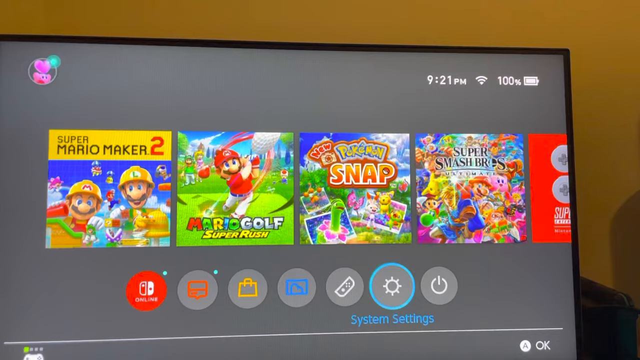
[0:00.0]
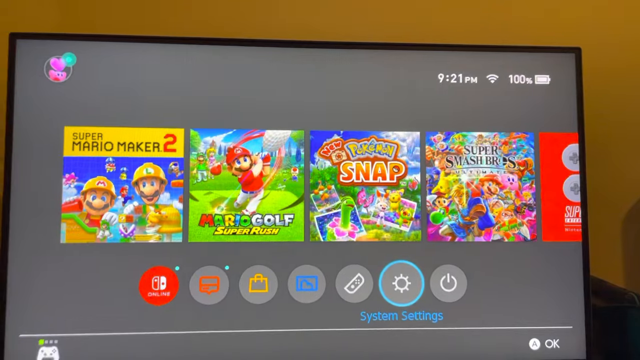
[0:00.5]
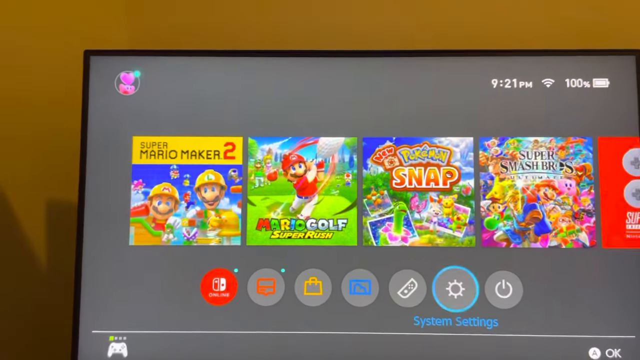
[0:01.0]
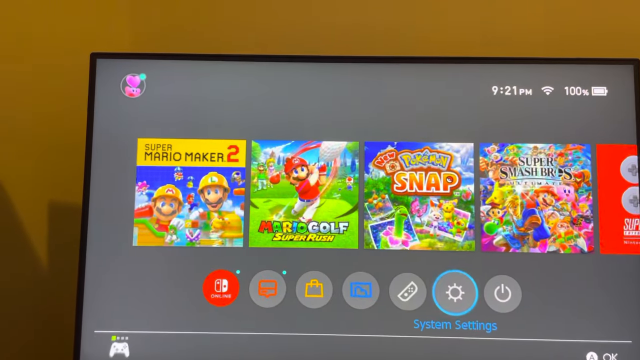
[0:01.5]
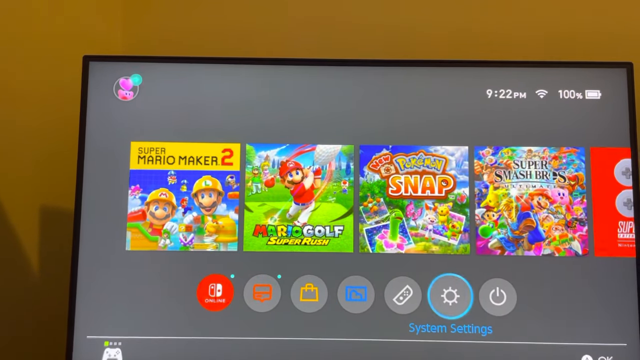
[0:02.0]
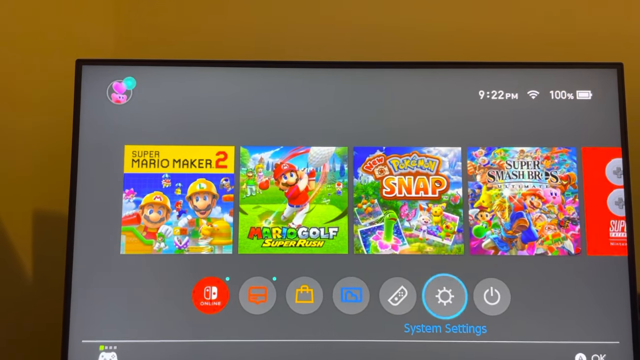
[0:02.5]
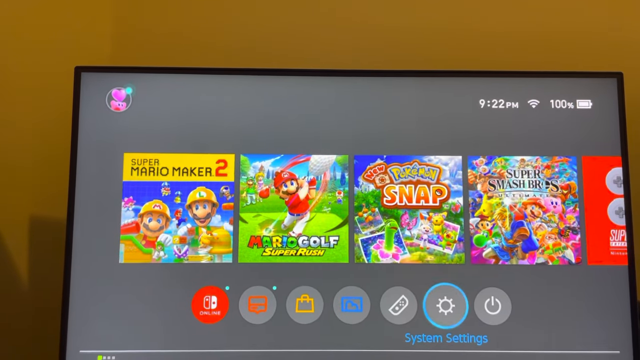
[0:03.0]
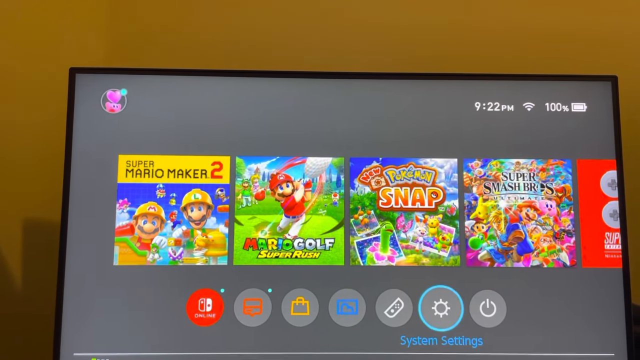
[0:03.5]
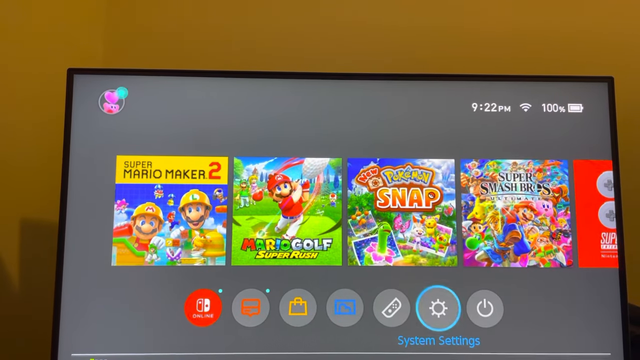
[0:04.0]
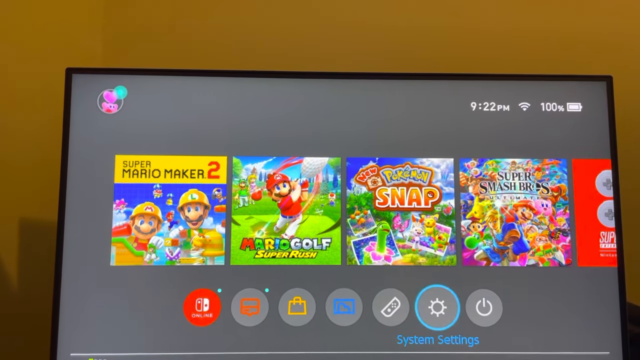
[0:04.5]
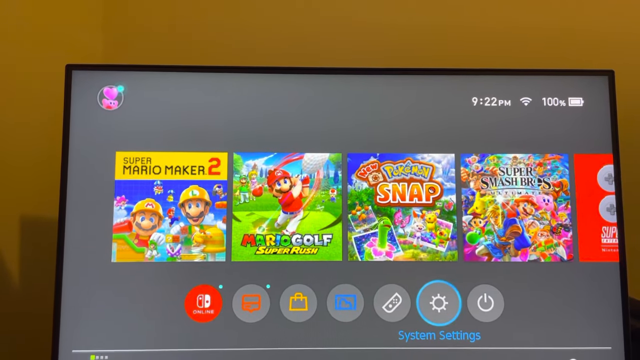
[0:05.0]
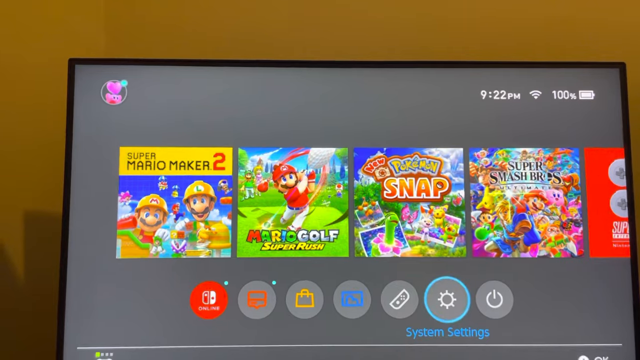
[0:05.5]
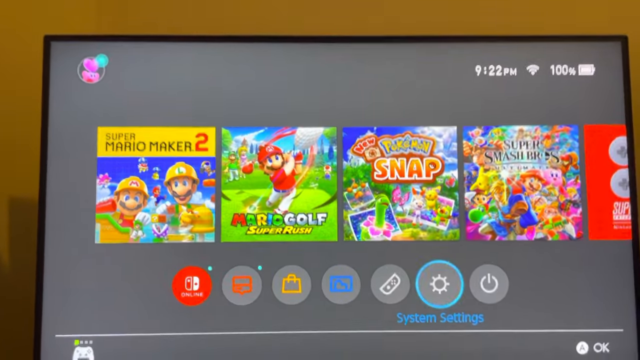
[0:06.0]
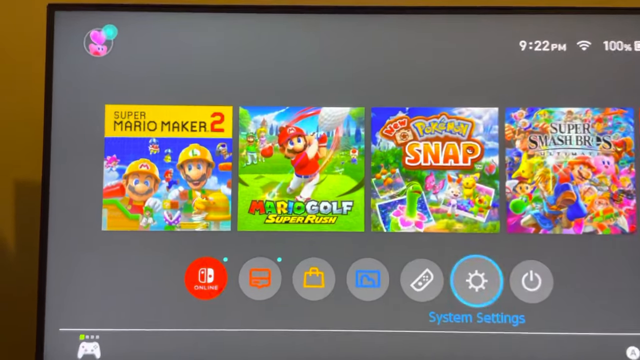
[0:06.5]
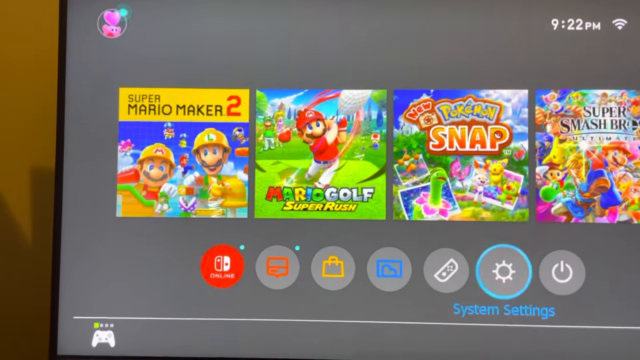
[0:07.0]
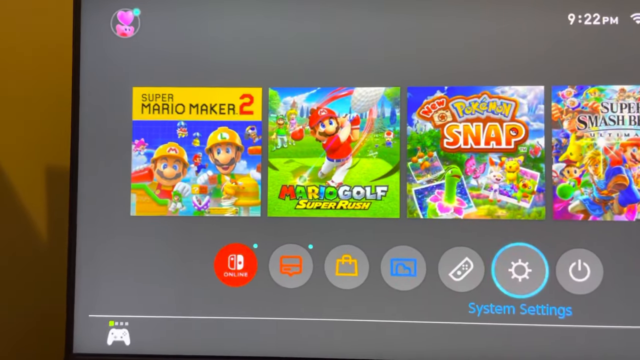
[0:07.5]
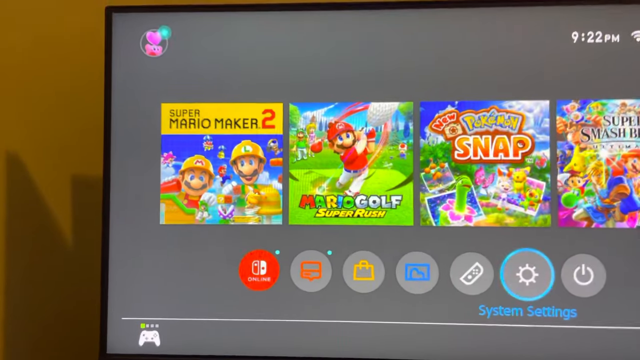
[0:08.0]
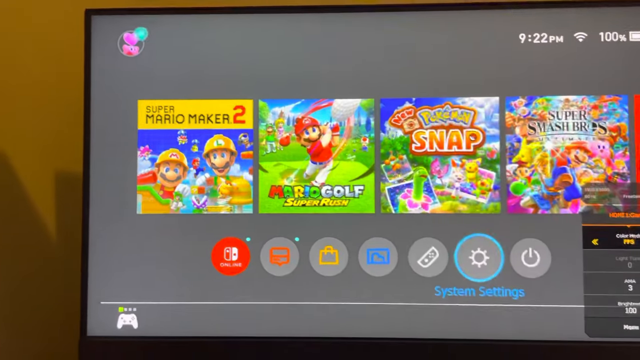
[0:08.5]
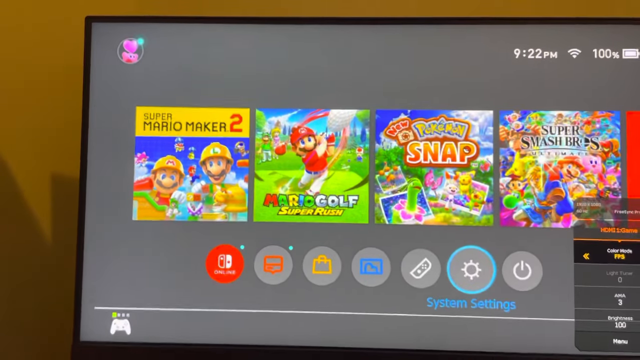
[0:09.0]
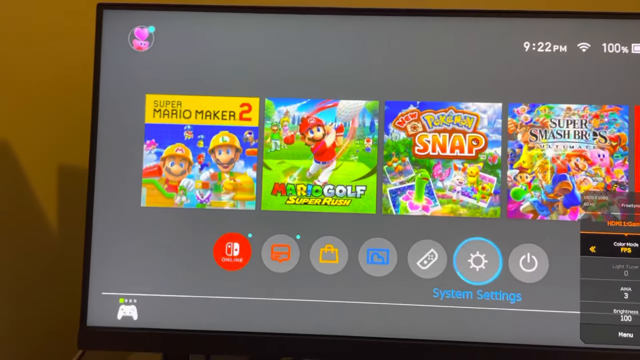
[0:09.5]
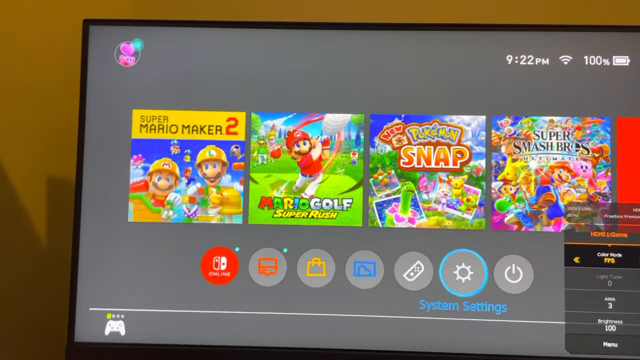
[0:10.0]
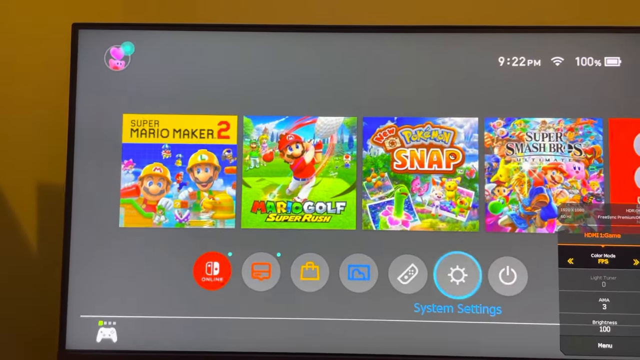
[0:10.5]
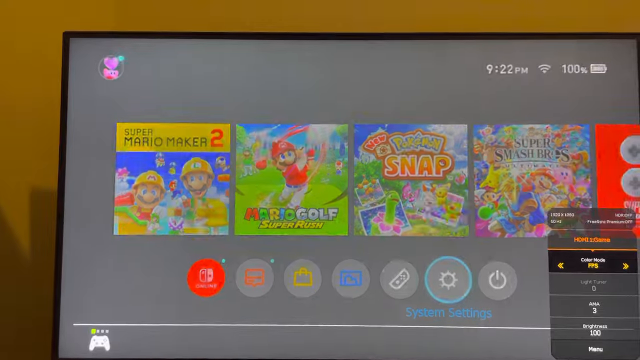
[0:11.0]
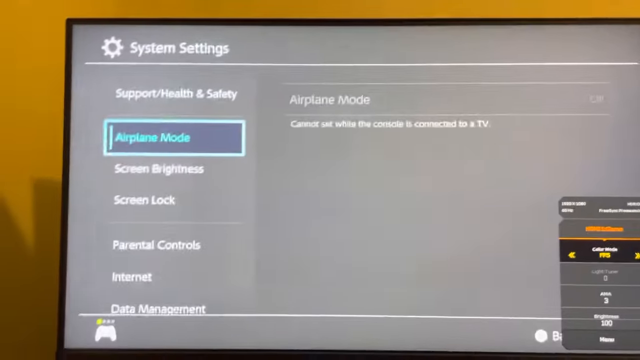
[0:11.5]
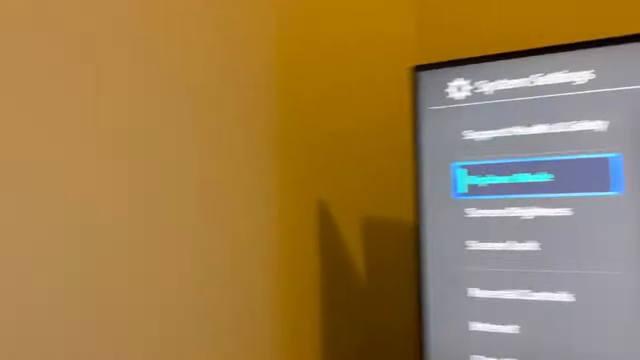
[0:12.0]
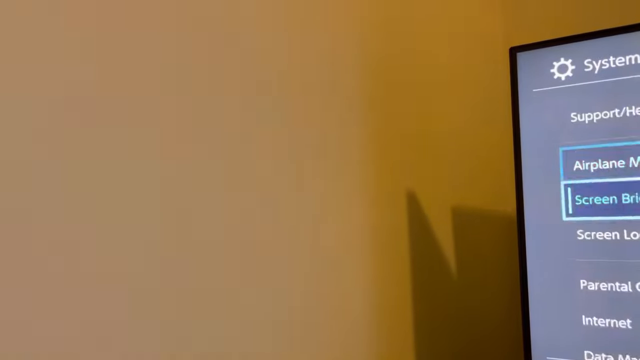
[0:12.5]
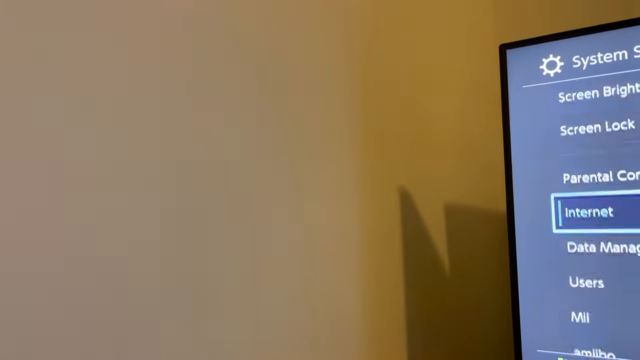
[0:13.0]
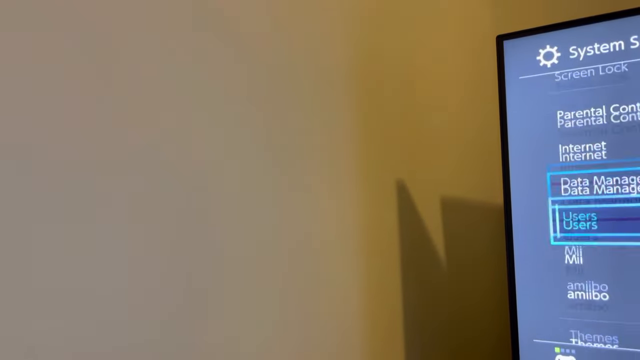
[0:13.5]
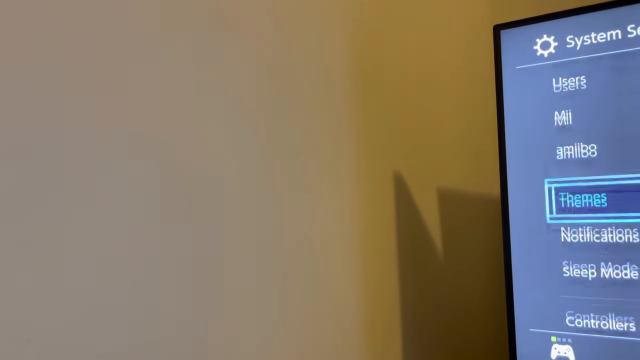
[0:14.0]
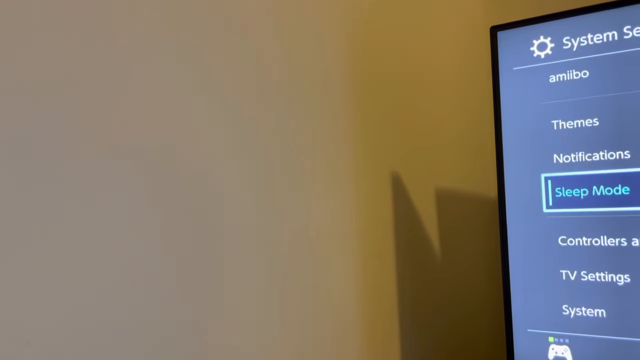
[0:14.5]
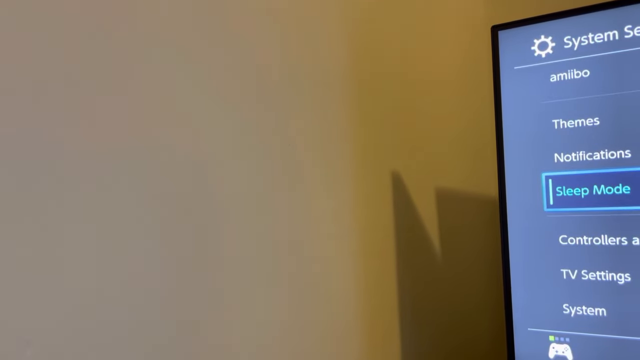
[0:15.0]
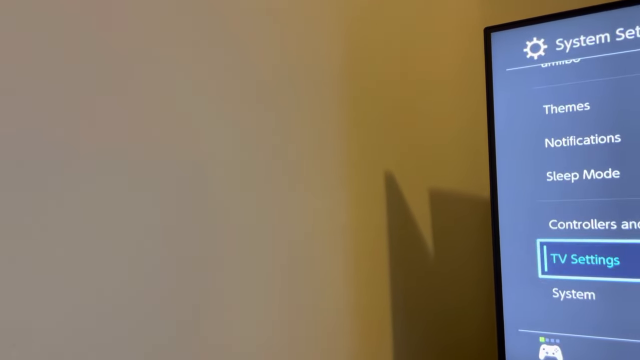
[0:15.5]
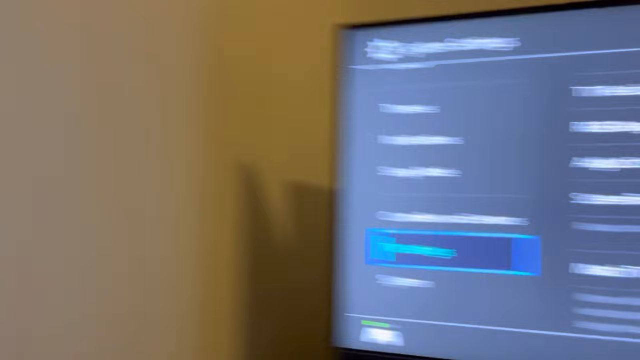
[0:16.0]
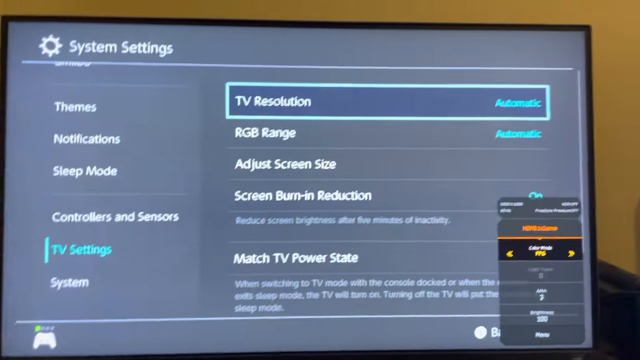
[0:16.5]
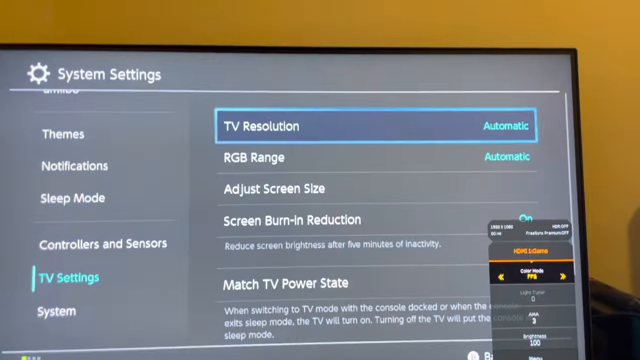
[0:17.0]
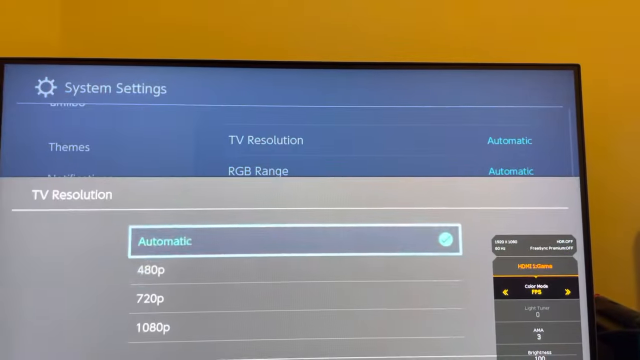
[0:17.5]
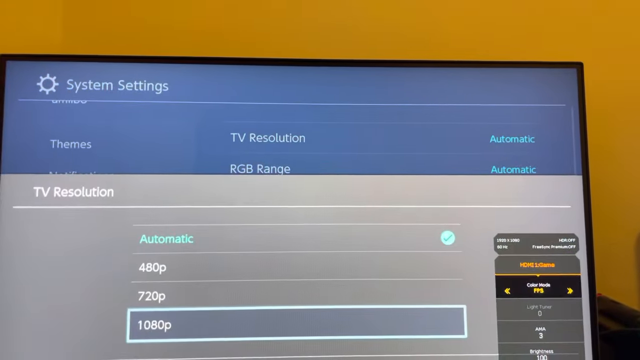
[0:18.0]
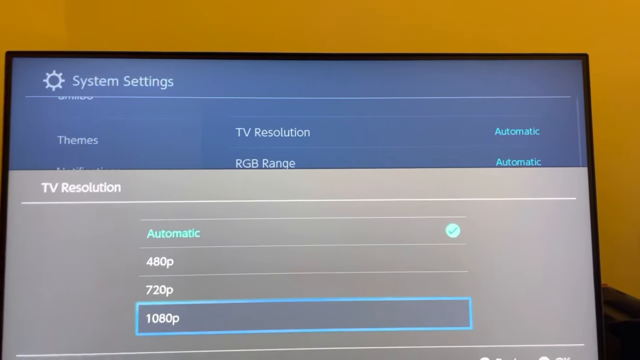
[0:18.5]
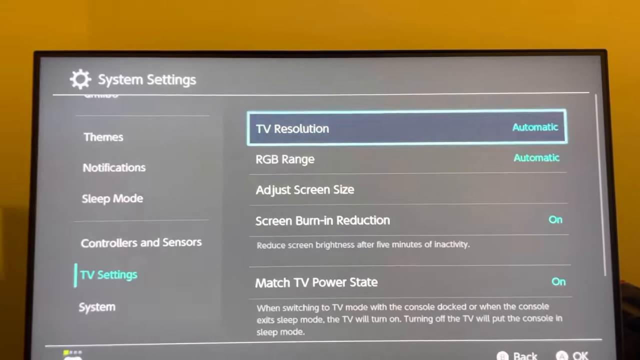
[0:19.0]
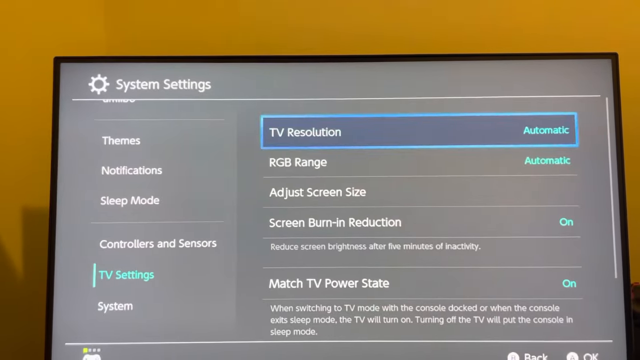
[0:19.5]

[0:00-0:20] Someone is adjusting system settings so that games work properly on their display. Super Mario Maker 2, Mario Golf Super Rush, New Pokemon Snap and Super Smash Brothers are set up on what appears to be a big-screen TV. The screen shows the time as 9:22 p.m., a Wi-Fi connection and 100% battery. The screen reads "TV settings" and "HDMI", suggesting it is probably a TV, though it could possibly be a laptop. The camera is not steady.